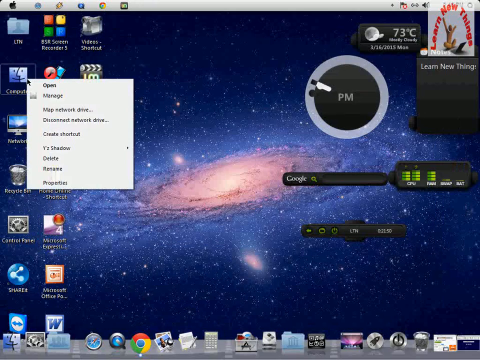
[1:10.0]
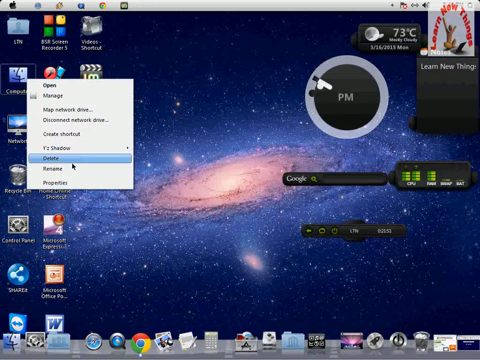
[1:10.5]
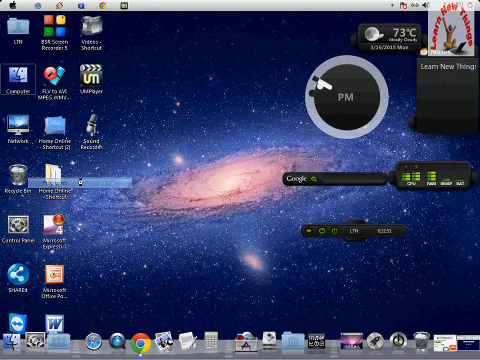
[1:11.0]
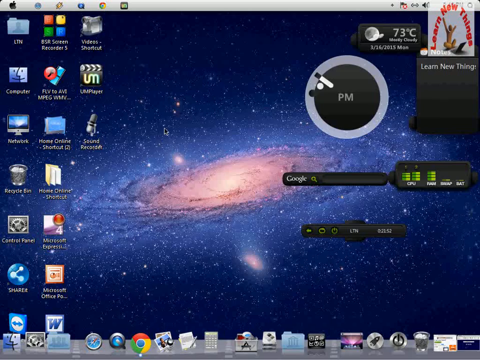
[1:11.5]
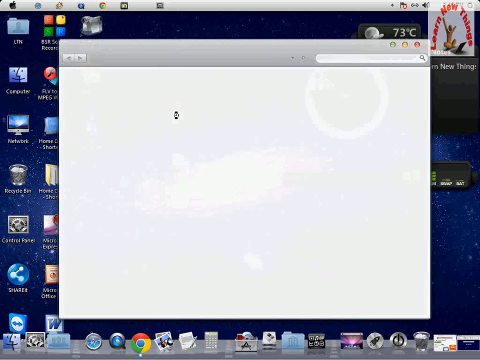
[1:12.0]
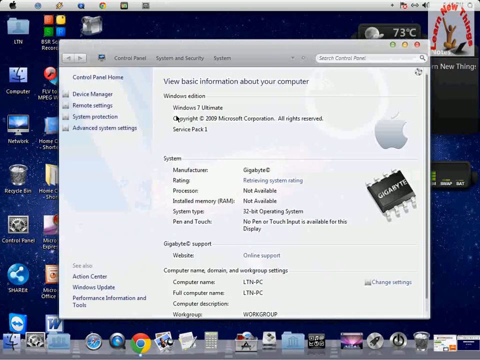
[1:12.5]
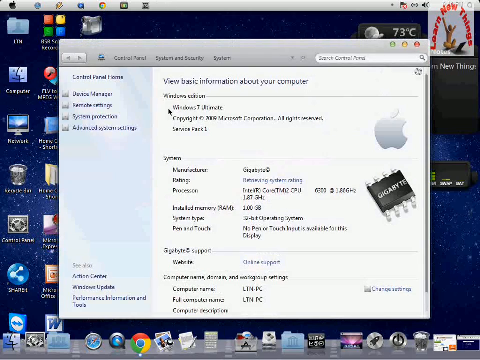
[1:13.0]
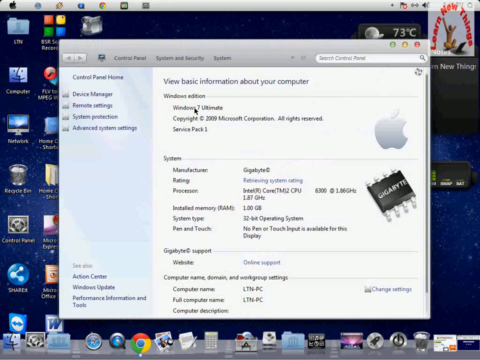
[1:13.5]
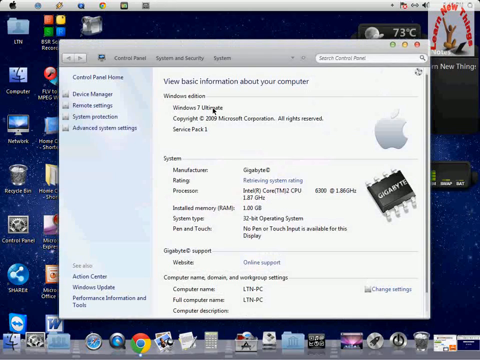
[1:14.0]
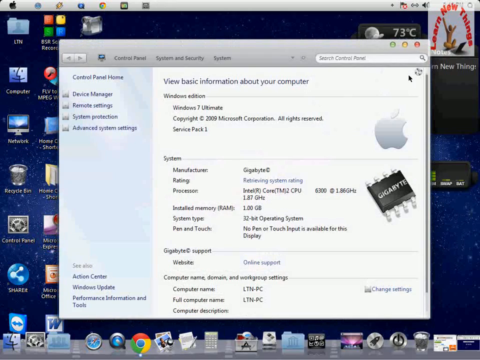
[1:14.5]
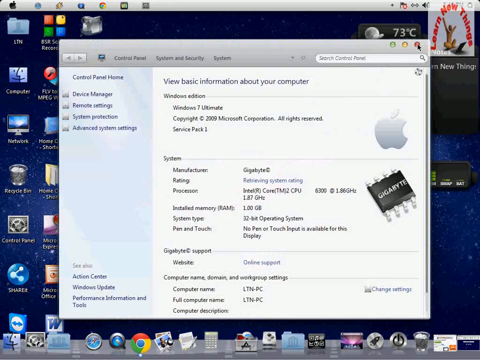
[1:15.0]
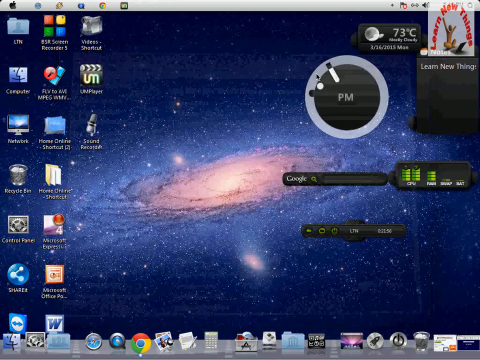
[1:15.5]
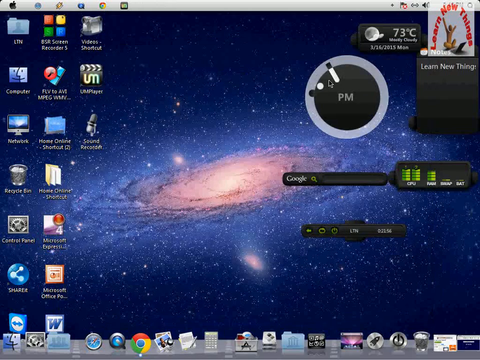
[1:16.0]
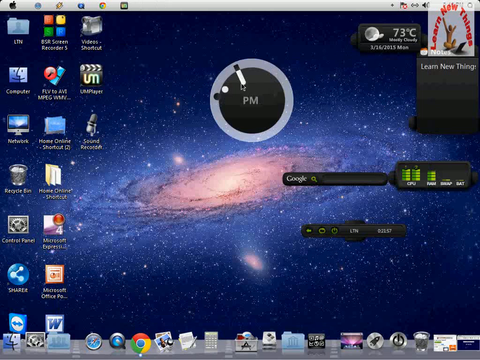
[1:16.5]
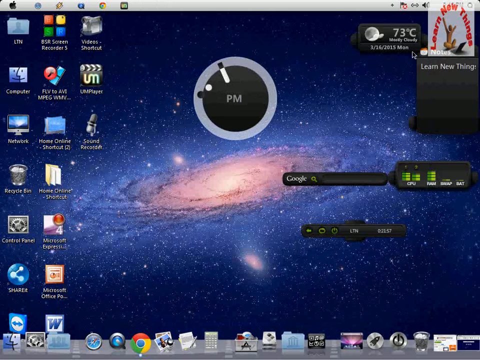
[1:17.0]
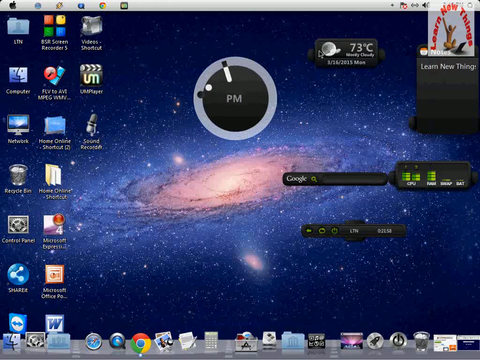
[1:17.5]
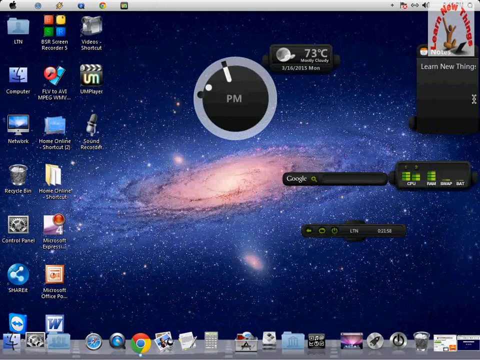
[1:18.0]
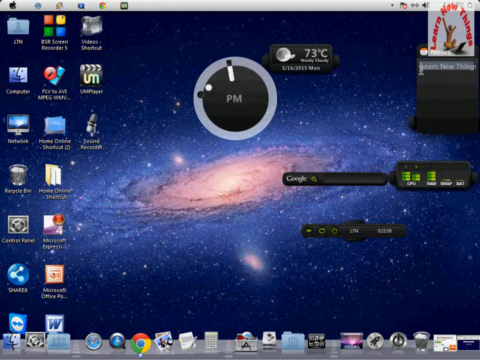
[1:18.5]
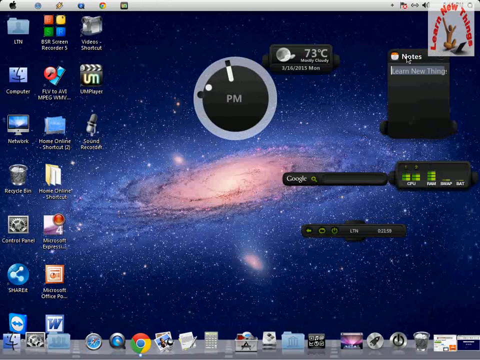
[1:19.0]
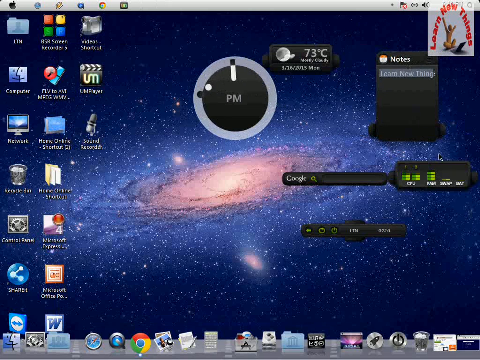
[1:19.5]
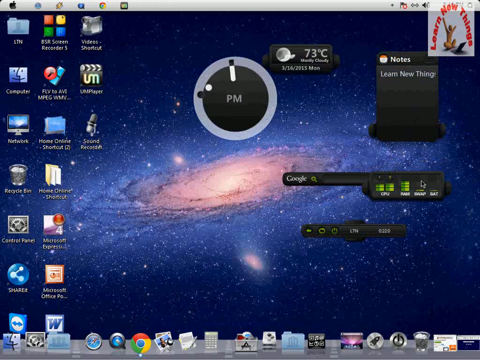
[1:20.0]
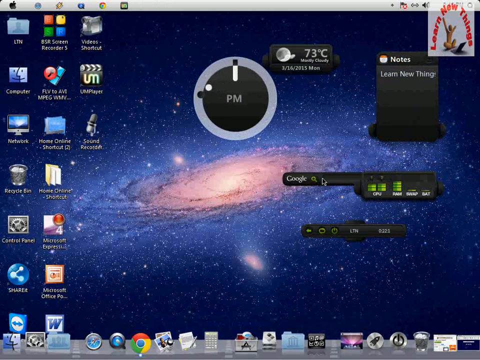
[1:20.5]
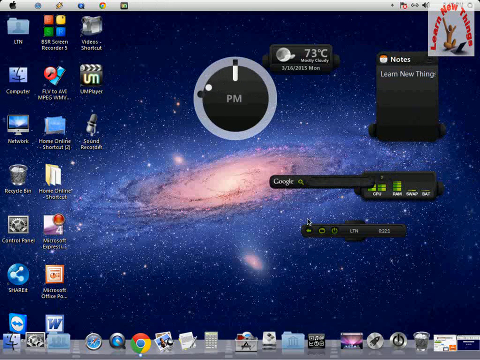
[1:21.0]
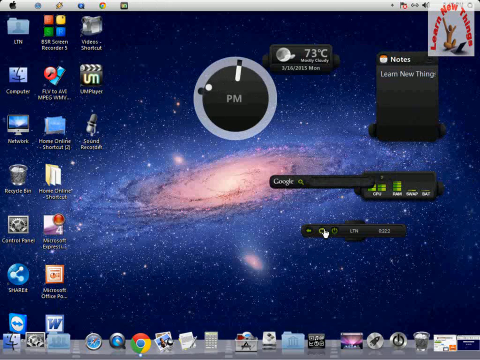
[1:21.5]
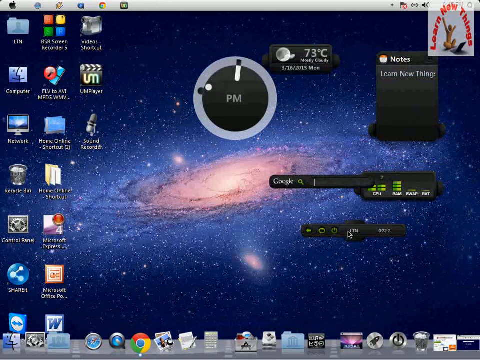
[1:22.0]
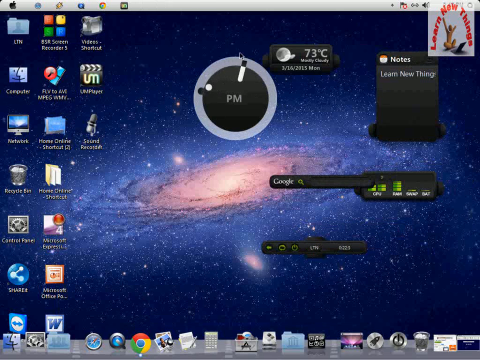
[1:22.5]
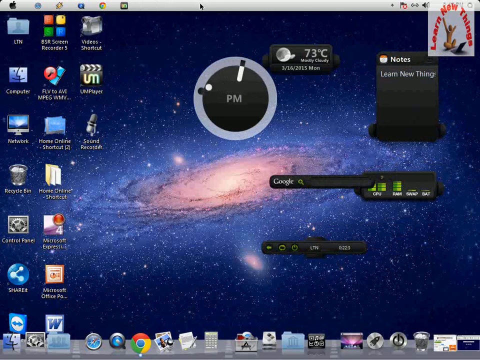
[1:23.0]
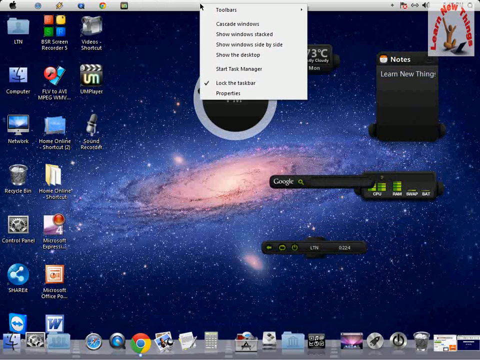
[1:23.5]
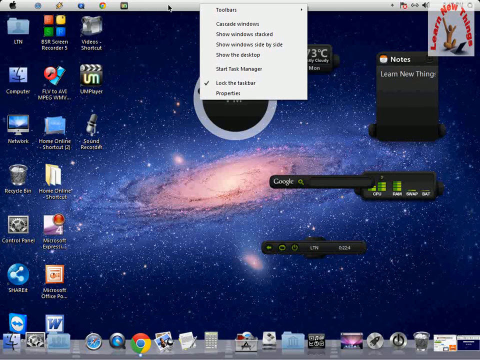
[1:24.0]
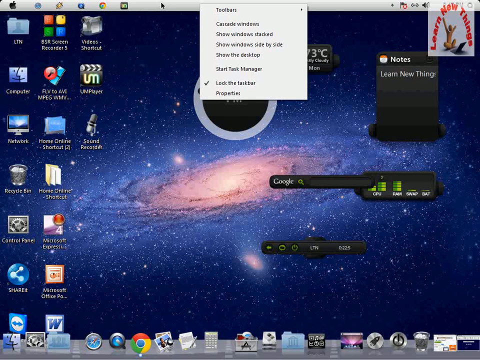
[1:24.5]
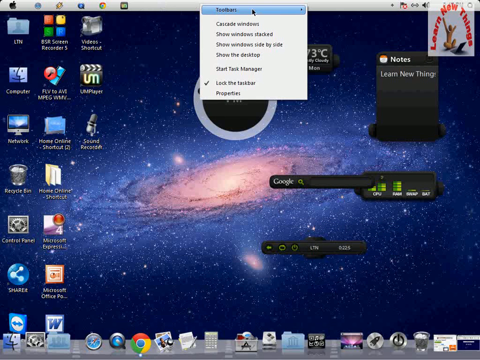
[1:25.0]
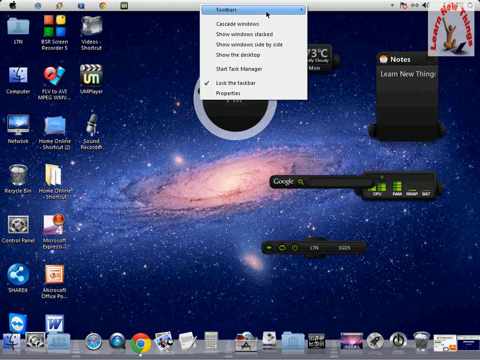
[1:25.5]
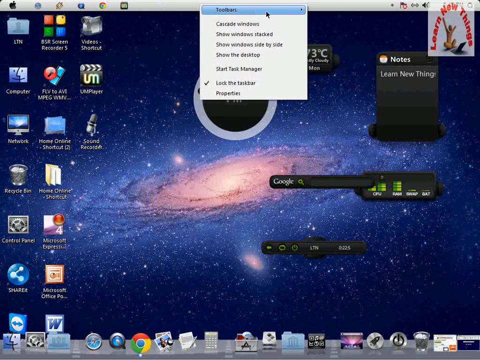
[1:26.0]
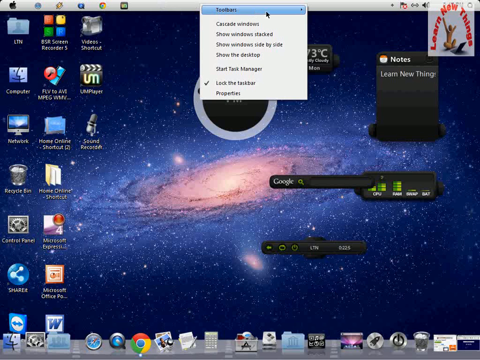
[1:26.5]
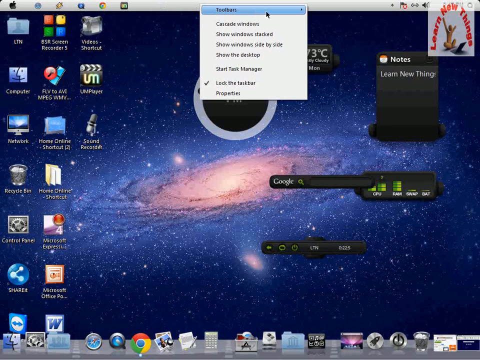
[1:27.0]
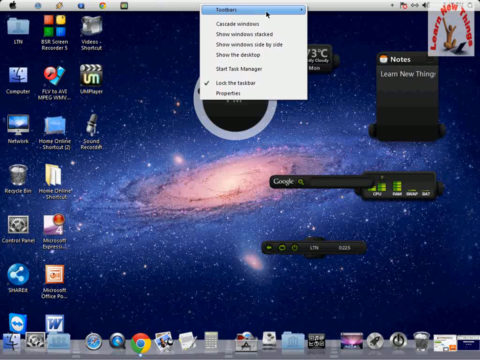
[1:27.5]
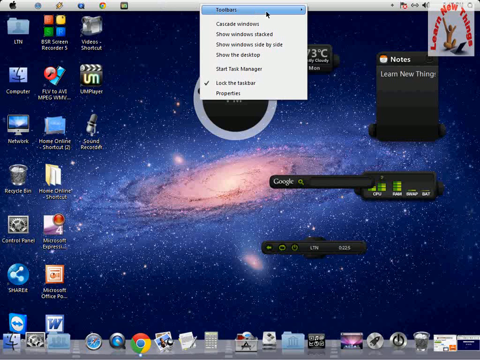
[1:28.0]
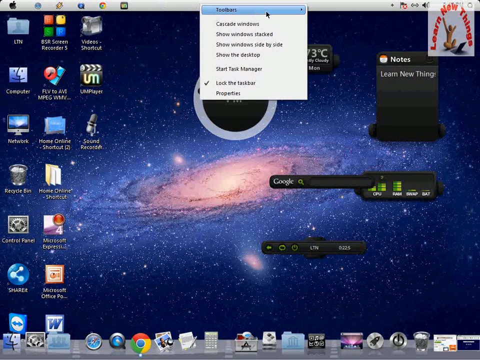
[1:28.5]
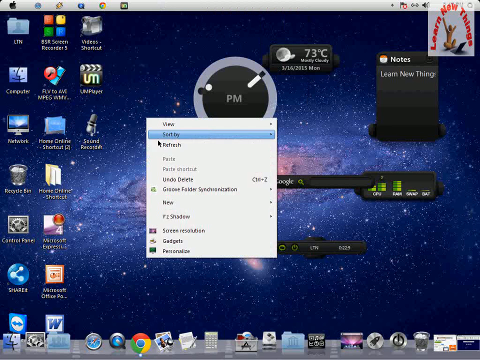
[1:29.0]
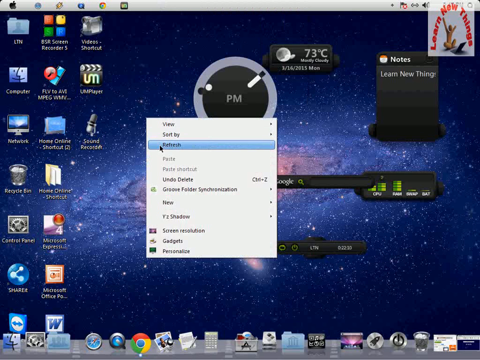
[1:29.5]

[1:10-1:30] The person is on an app whose name begins with a C but is unreadable; its icon has a face that is half darker purple and half lighter purple. A right-click menu appears to be open, with options including "open", "manage", "map network drive", maybe "disconnect network drive", a "create" option that cannot be read, "delete" and "rename", plus a blurry one. They click on "properties", which opens the control panel, and then exit out of it. They move the clock, which shows "PM", from the right side toward the middle, and do the same with the temperature display. A moon icon is shown, suggesting nighttime. The date is blurry but appears to be March, either the 14th or the 16th, with the year either 2013 or 2015. It shows "MLN", apparently Monday, mostly cloudy and "73 degrees" Celsius. They also move the notes and a Google search bar.